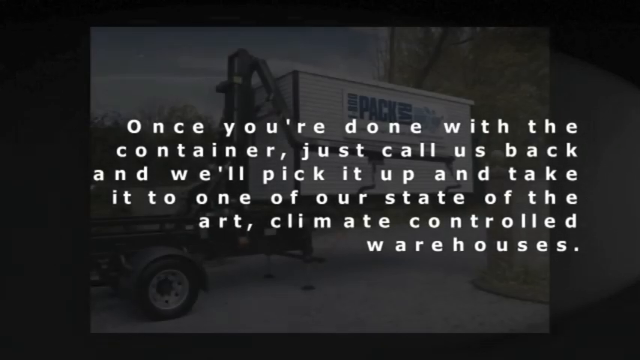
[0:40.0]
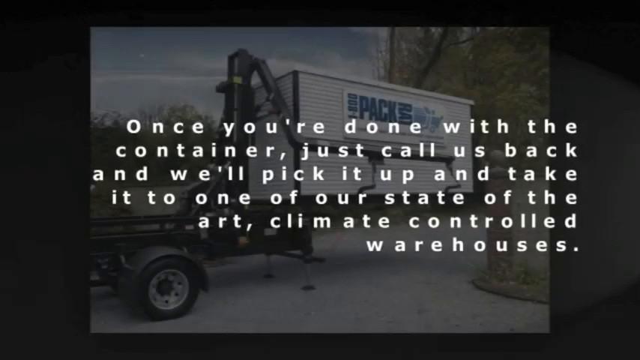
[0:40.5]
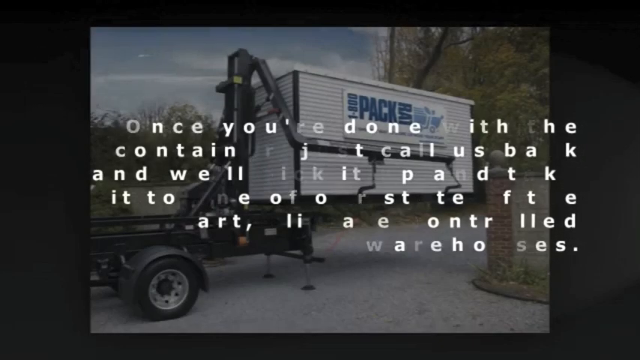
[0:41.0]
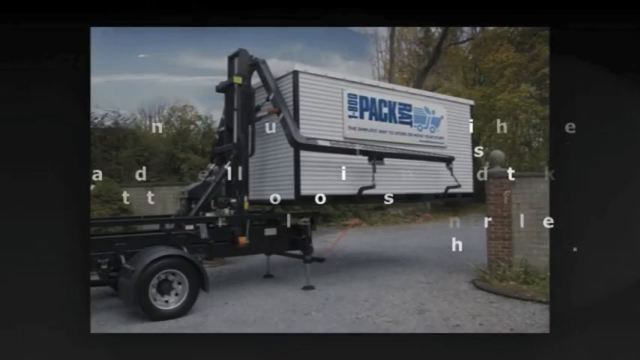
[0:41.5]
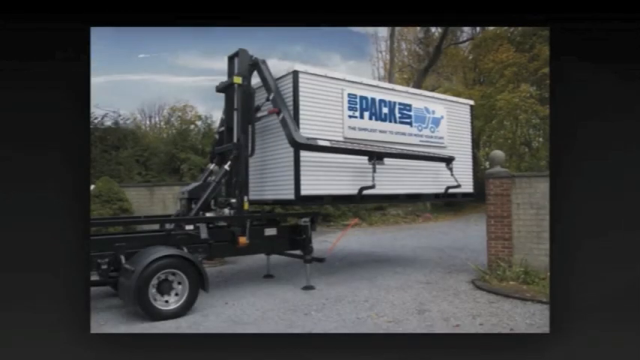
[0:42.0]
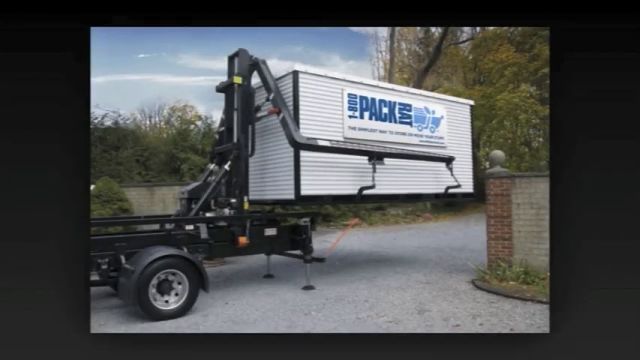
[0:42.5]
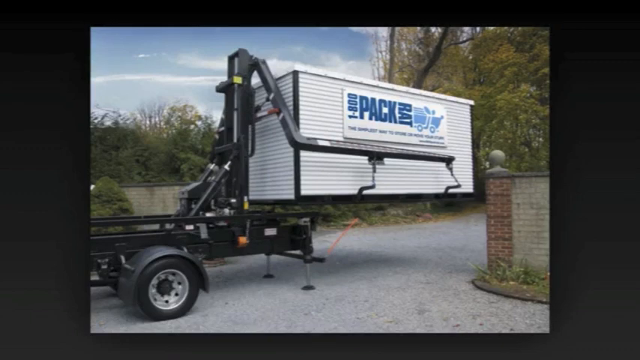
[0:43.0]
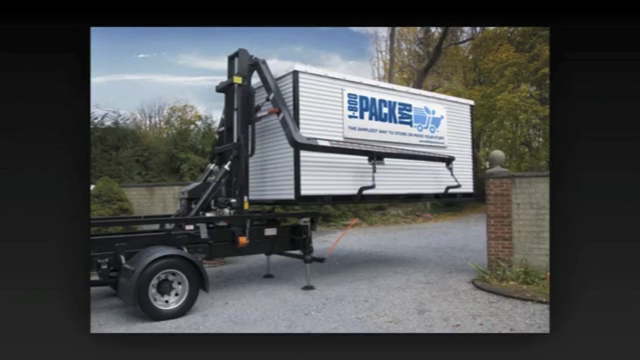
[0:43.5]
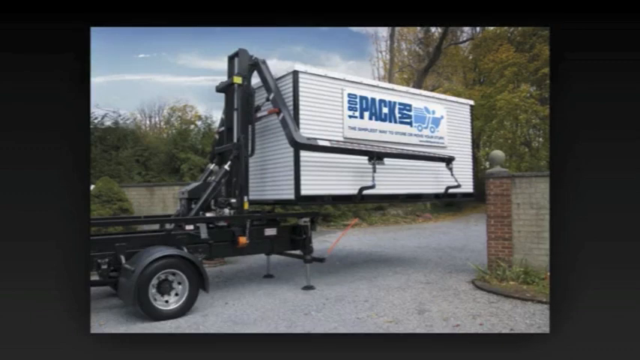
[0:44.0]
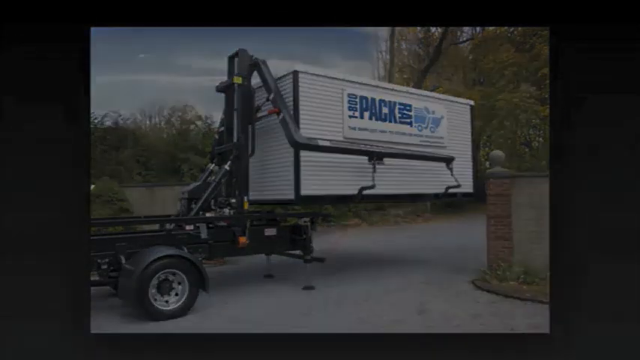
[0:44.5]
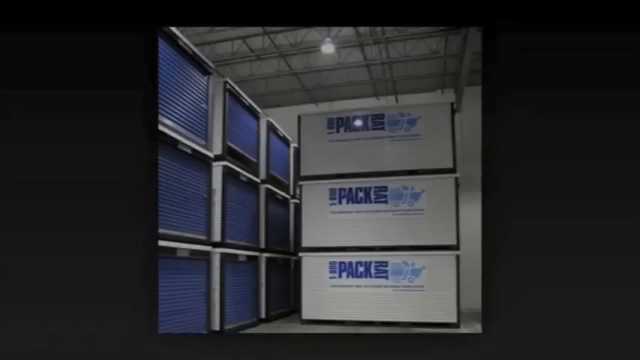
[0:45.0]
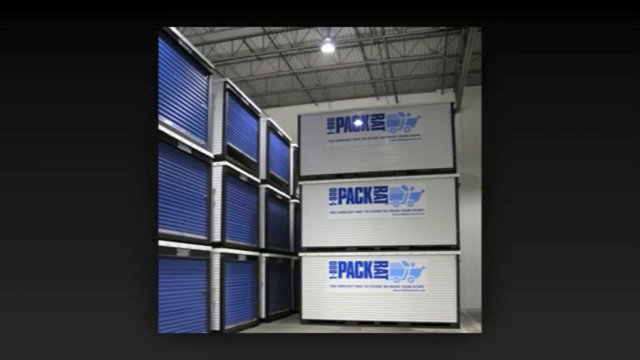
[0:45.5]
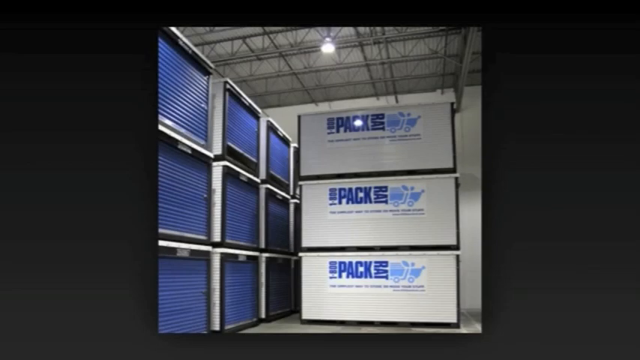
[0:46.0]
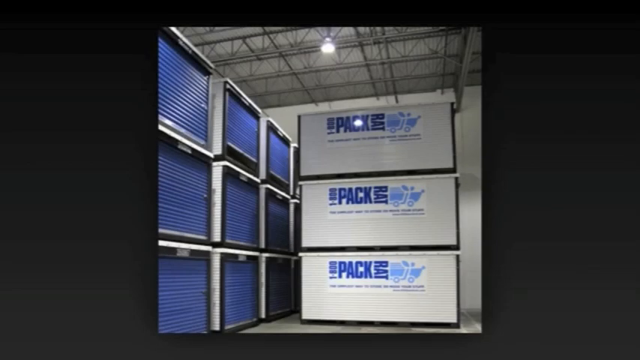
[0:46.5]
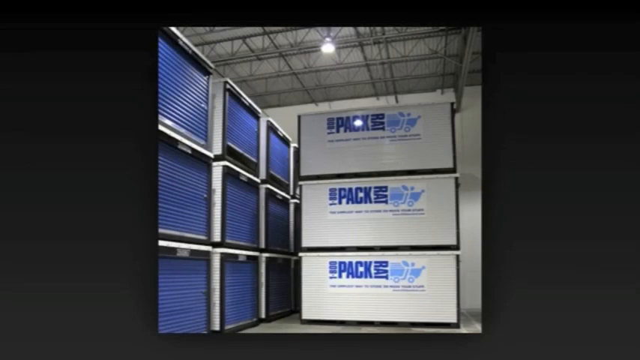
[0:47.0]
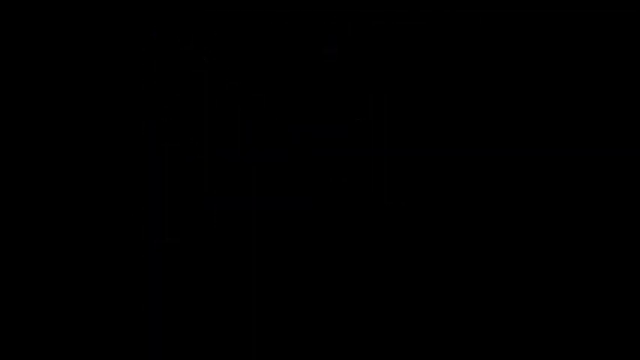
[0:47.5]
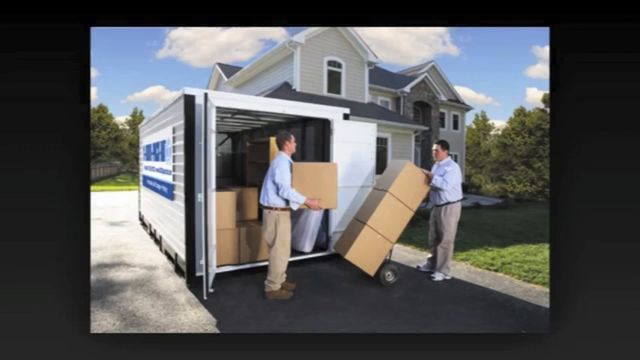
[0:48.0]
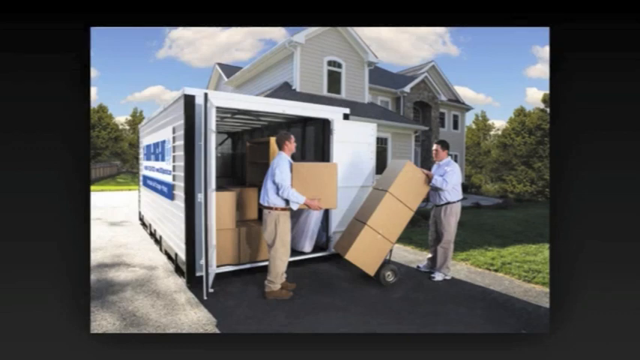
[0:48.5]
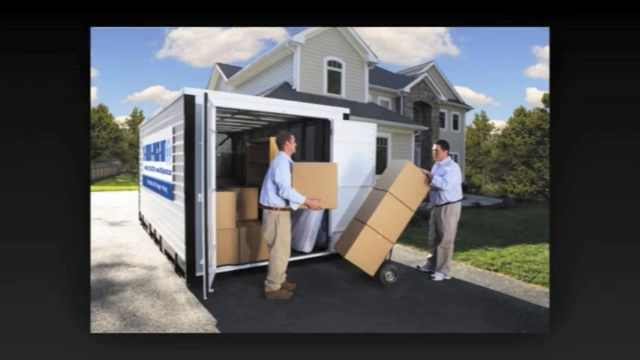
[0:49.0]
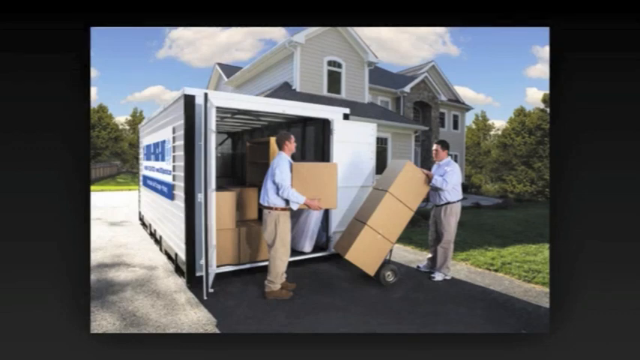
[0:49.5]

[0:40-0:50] The message "once you're done with the container just call us back and we'll pick it up and take it to one of our state-of-the-art climate-controlled warehouses" continues. Another shipping container that says "1-800-PACKRAT" is shown being picked up by some kind of arm attached to a truck and carried away. The scene then moves to some kind of warehouse.